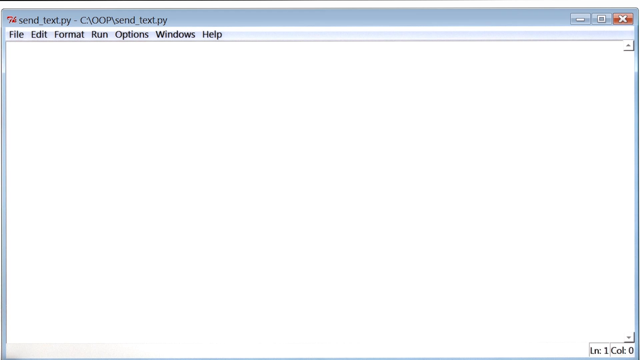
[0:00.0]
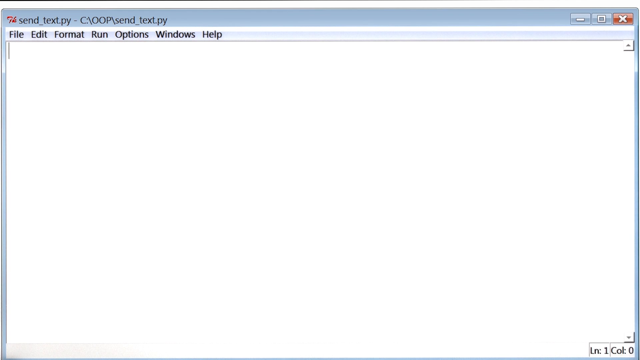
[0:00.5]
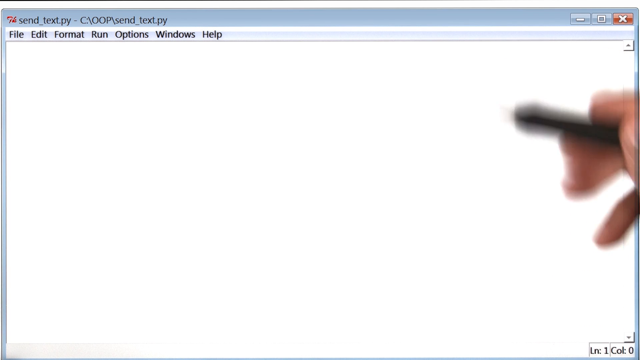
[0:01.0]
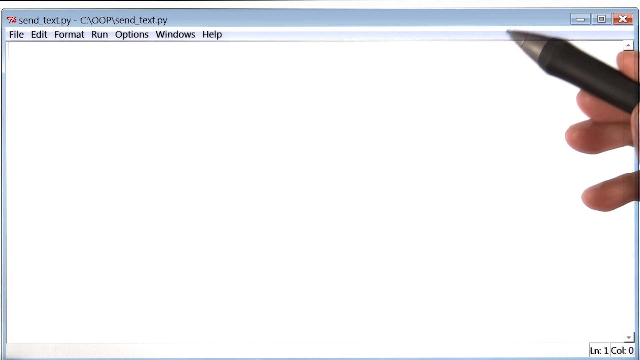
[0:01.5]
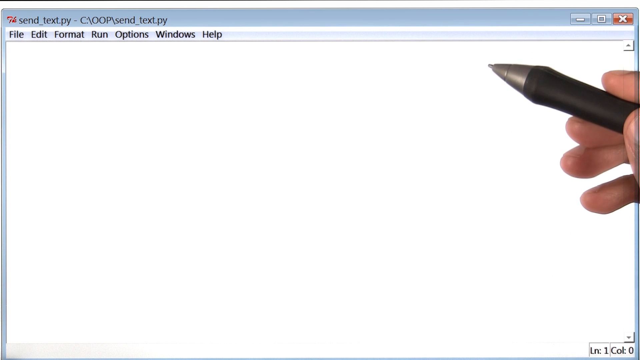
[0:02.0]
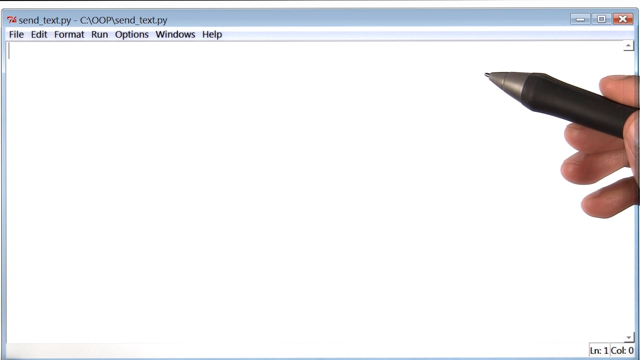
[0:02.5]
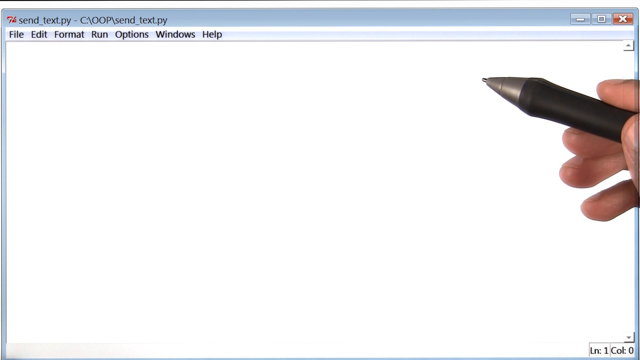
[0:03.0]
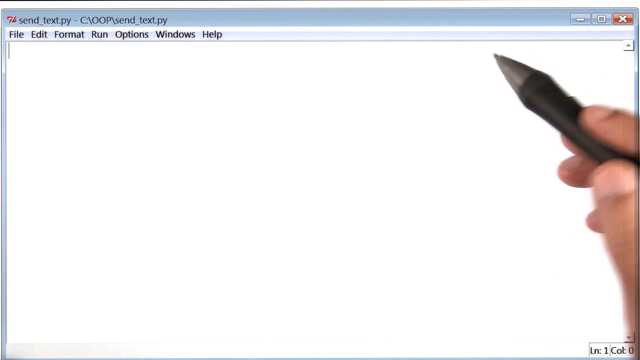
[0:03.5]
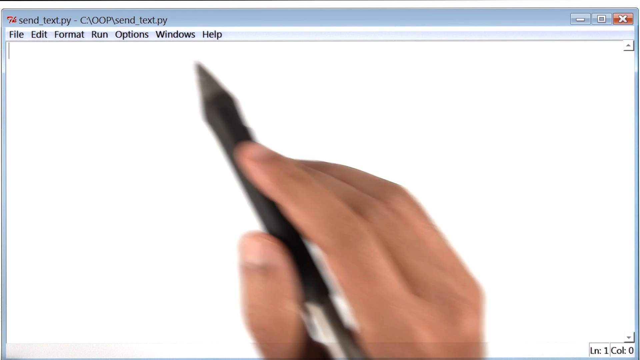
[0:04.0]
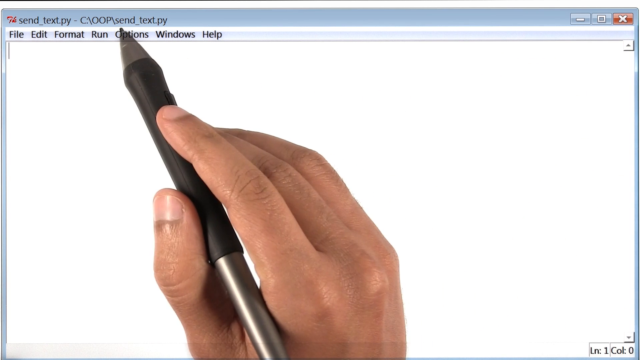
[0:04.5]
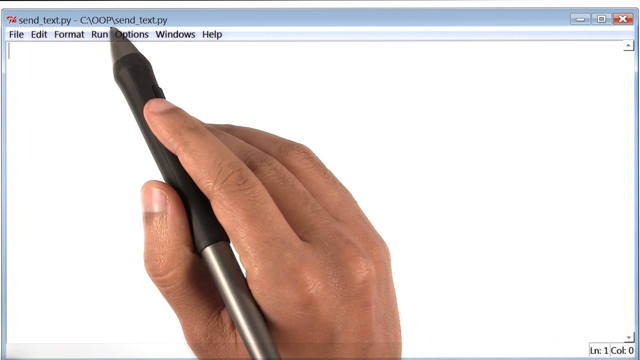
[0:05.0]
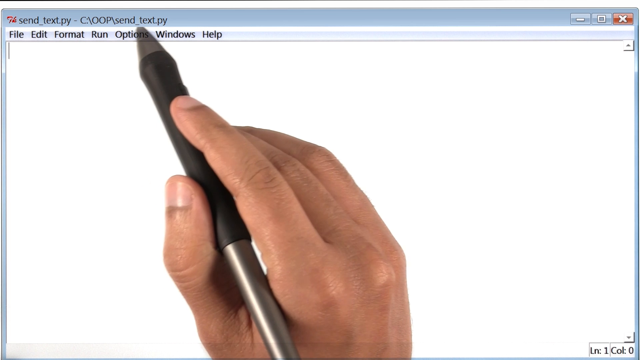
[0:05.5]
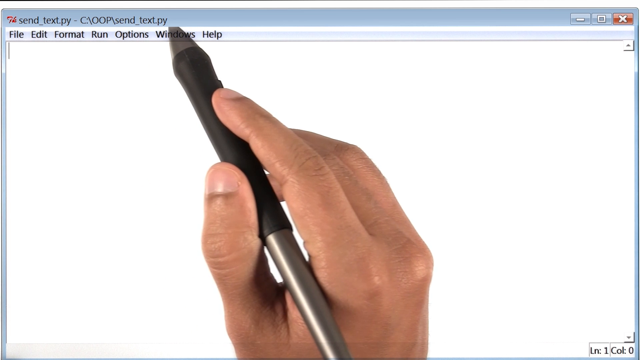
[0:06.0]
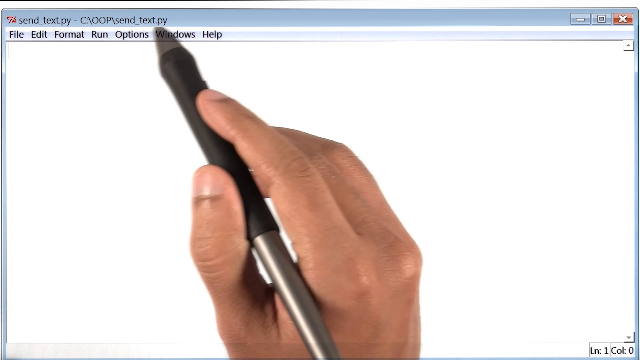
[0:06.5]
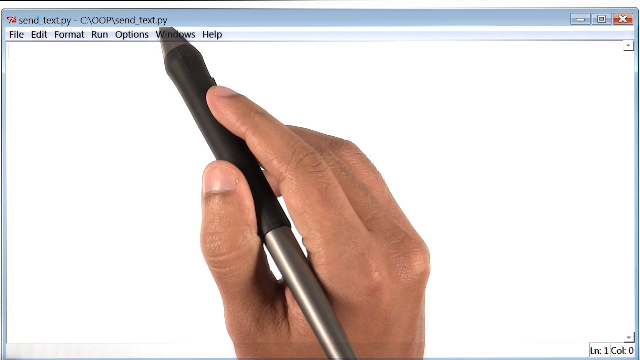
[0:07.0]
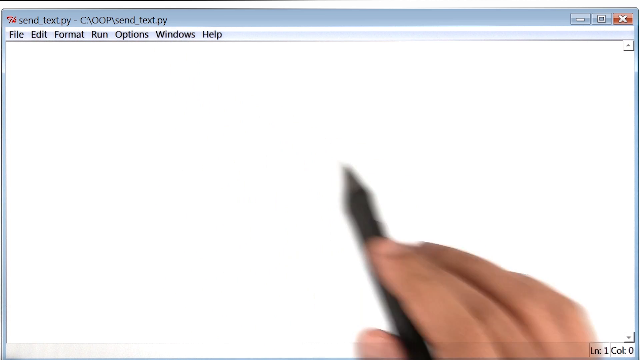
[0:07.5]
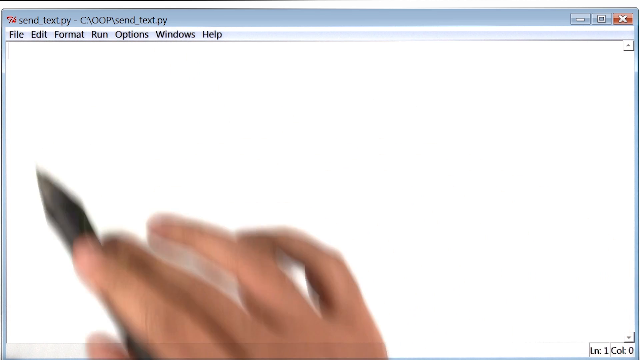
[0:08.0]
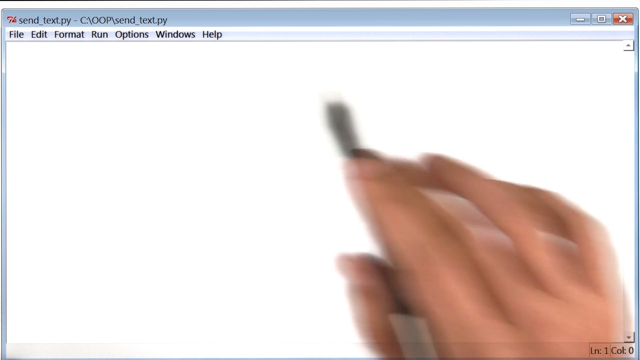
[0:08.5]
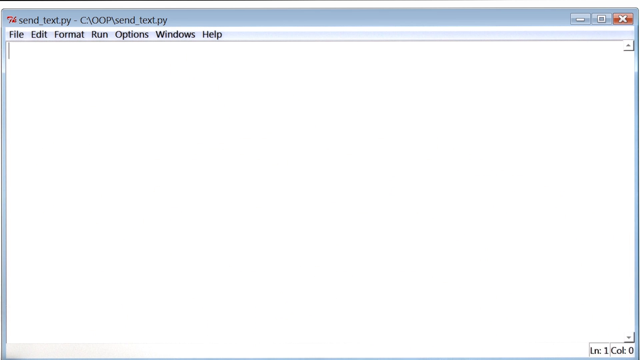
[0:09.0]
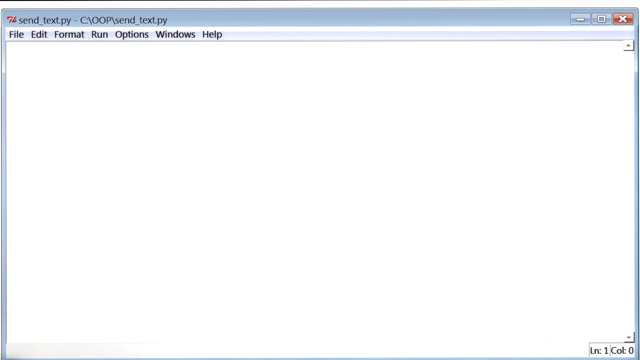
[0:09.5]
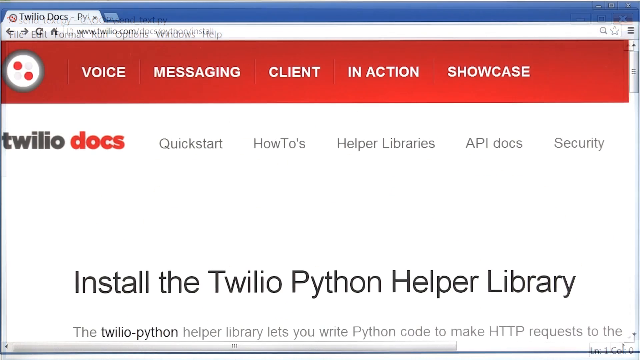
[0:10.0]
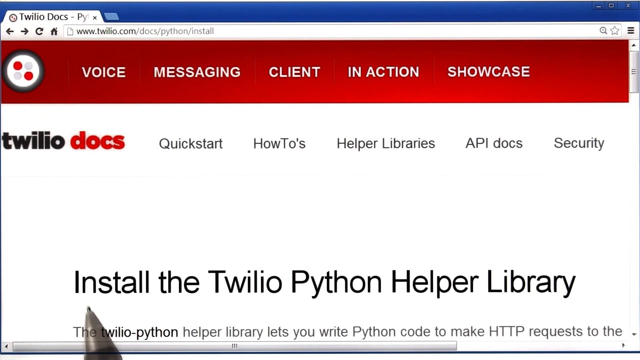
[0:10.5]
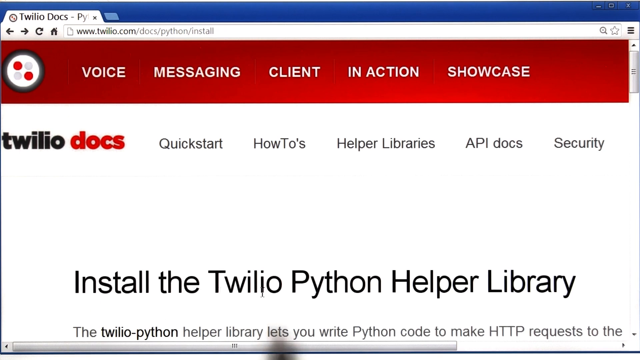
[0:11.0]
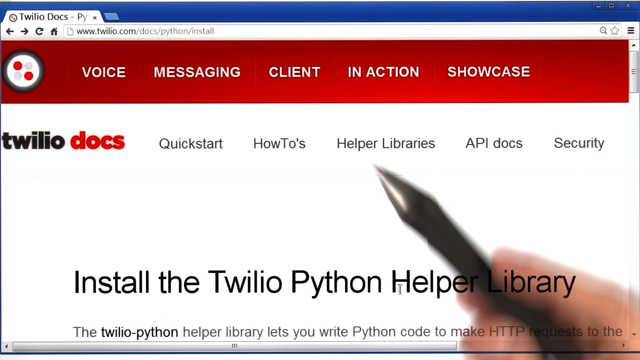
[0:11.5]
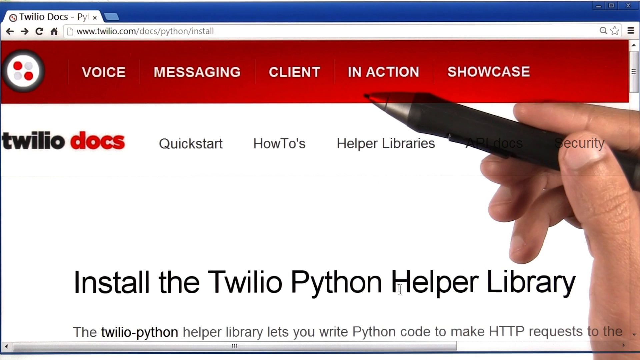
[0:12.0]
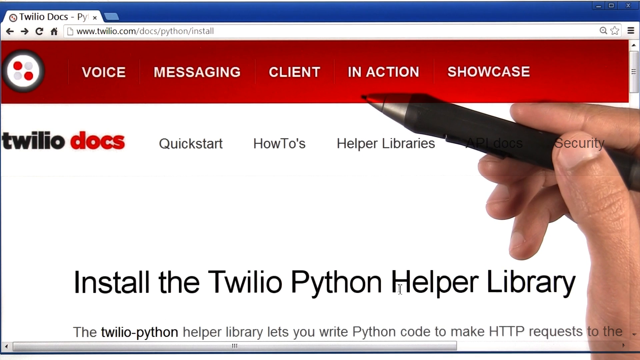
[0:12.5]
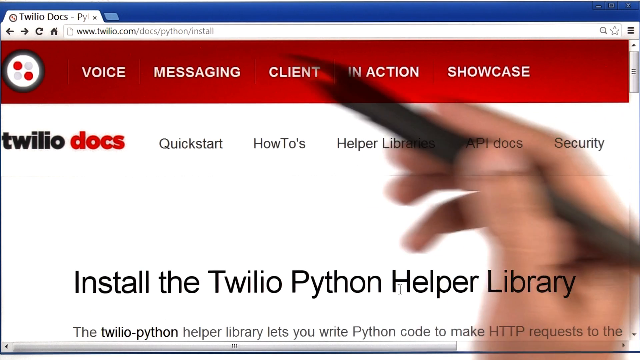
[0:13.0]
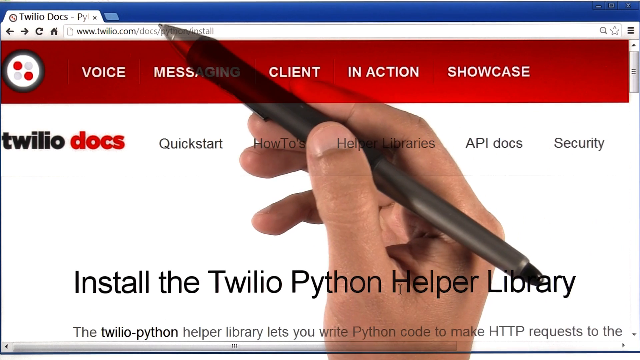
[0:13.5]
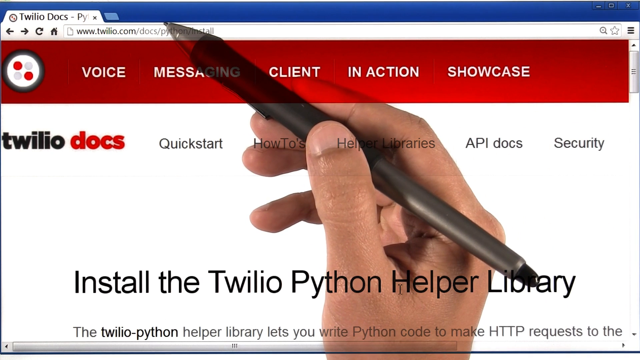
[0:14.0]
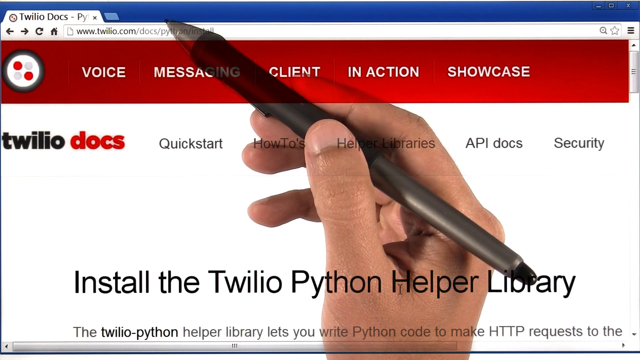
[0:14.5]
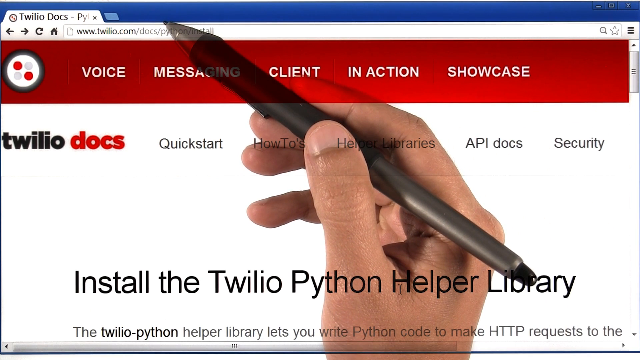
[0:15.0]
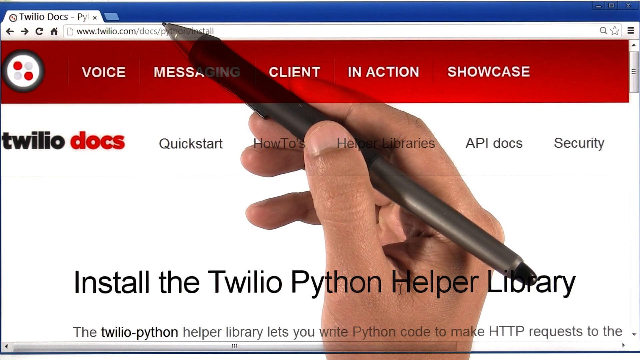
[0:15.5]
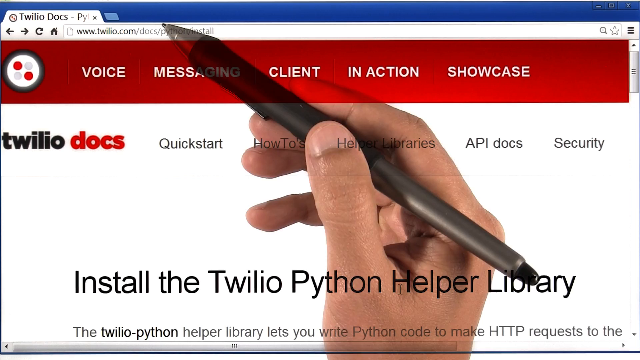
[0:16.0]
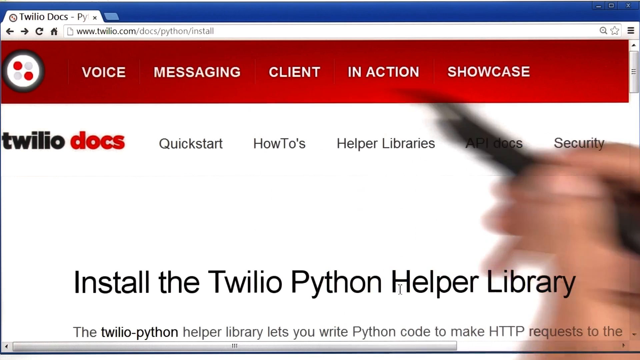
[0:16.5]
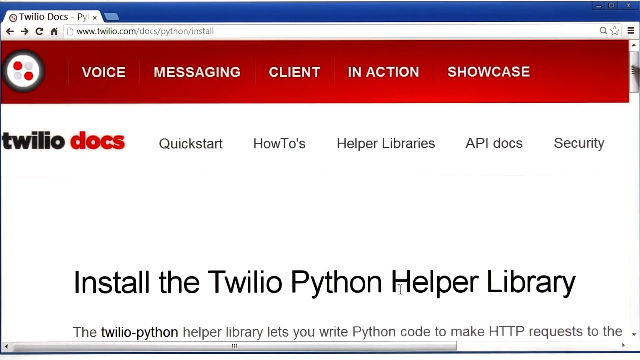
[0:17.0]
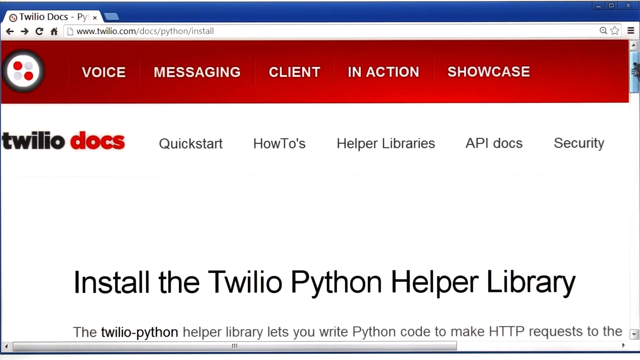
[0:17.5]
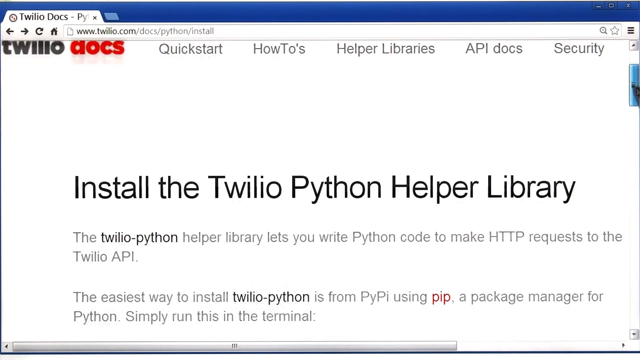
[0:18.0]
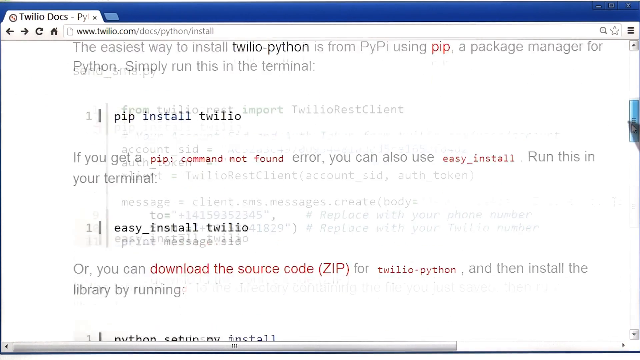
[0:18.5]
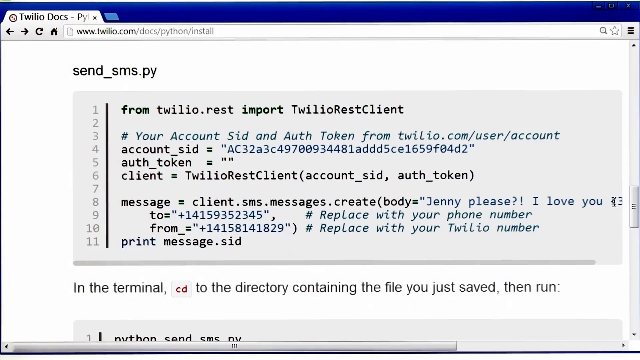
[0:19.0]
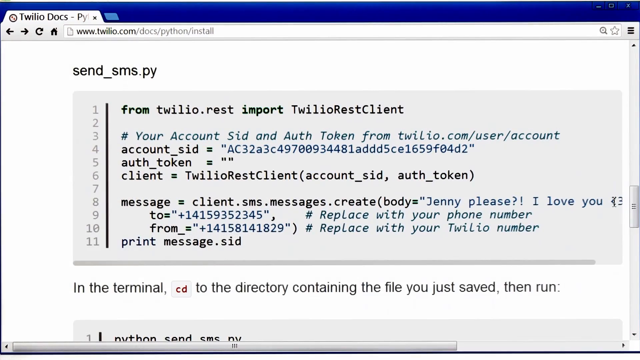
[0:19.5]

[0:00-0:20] A man holds a pen that lets him draw and write on the screen. He clicks on to the next page and shows the Twilo.com website, on a page for installing the Twilo Python Helper Library. Using the smart pen, he hovers over the web page and scrolls down. He then comes to a small amount of code and hovers the smart pen over it. He holds the pen in his right hand: a light-skinned hand grips it between the index finger and thumb, resting it on the middle finger, and uses it to control the web page, moving it in a circular motion before moving on to the next part of the video.